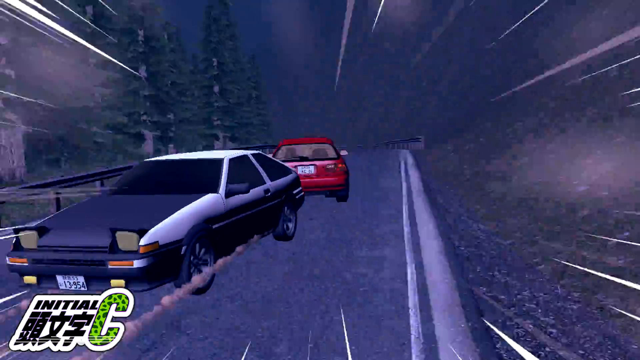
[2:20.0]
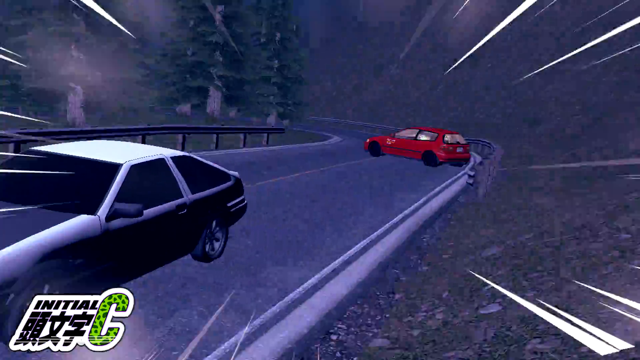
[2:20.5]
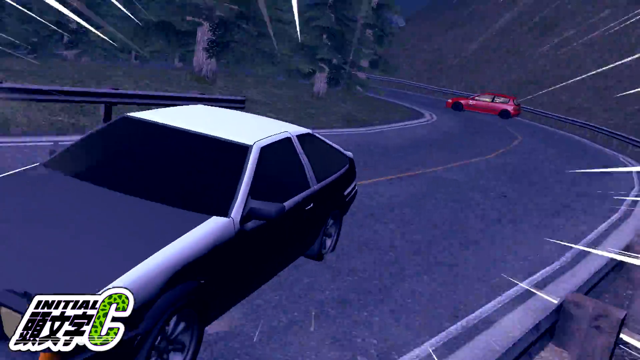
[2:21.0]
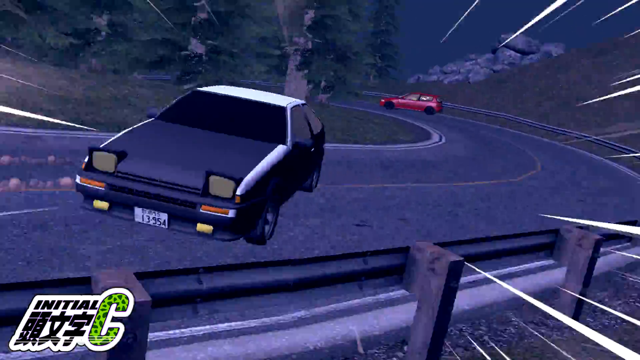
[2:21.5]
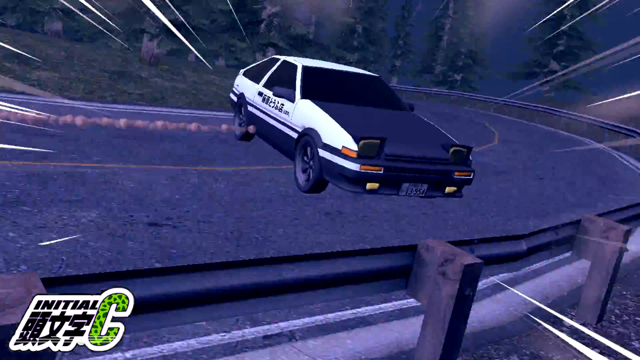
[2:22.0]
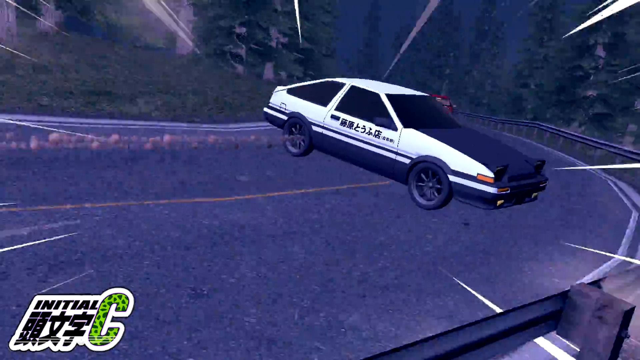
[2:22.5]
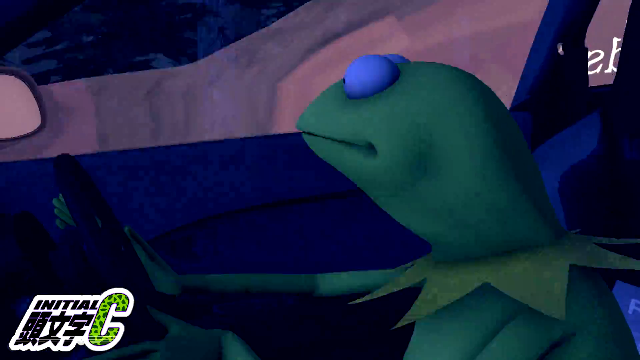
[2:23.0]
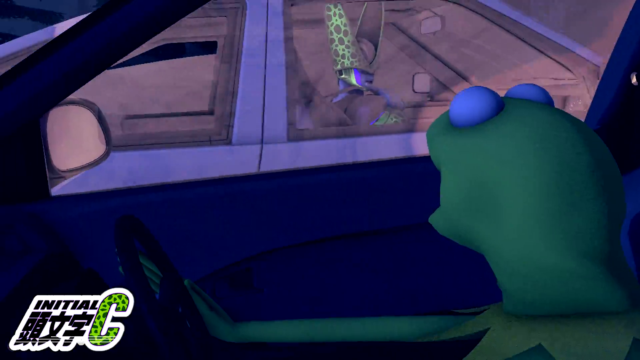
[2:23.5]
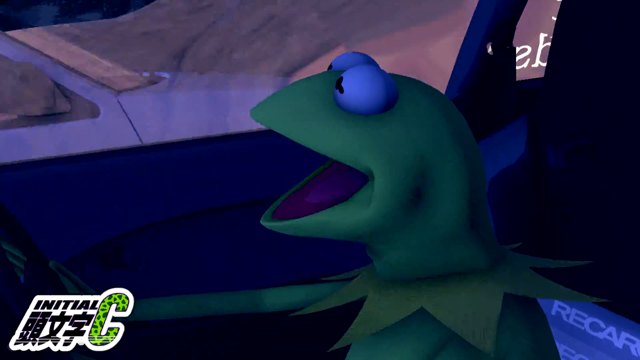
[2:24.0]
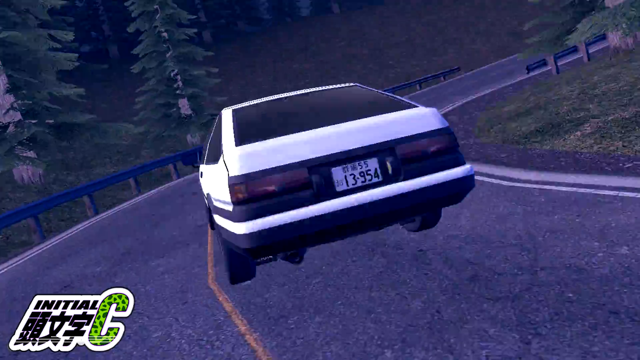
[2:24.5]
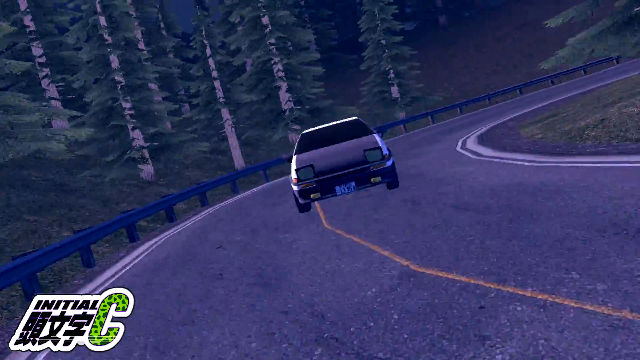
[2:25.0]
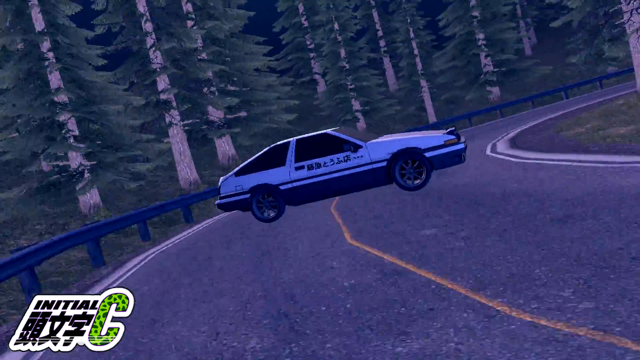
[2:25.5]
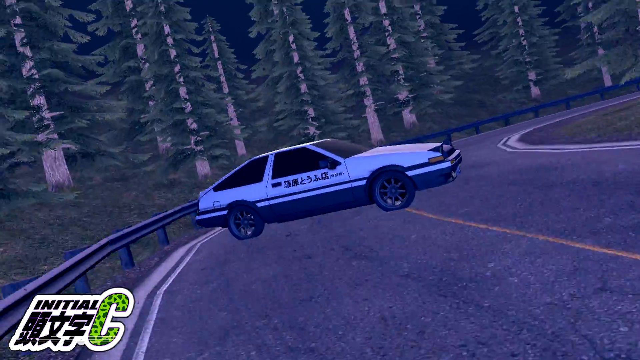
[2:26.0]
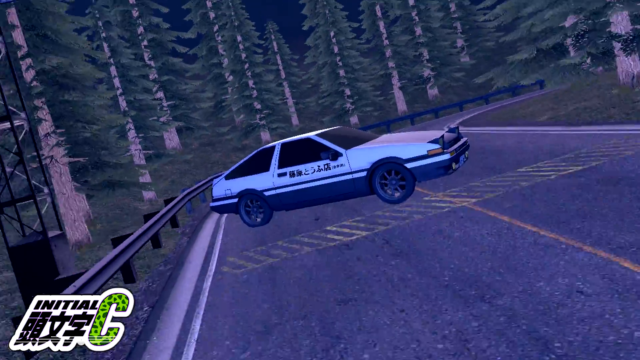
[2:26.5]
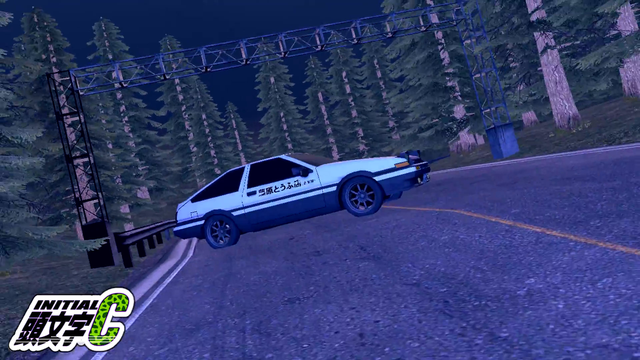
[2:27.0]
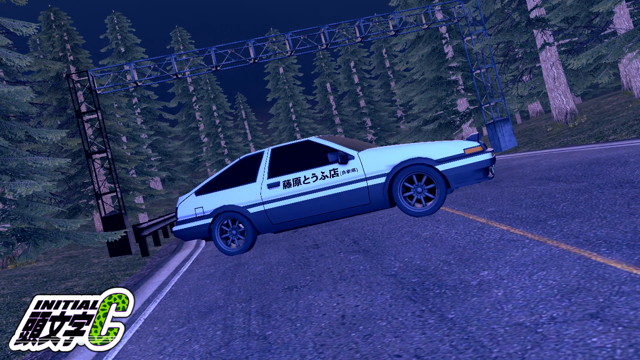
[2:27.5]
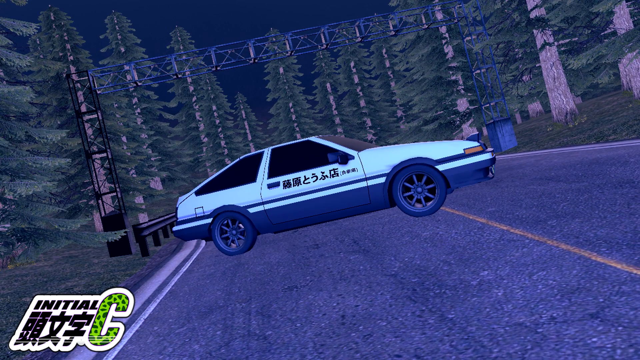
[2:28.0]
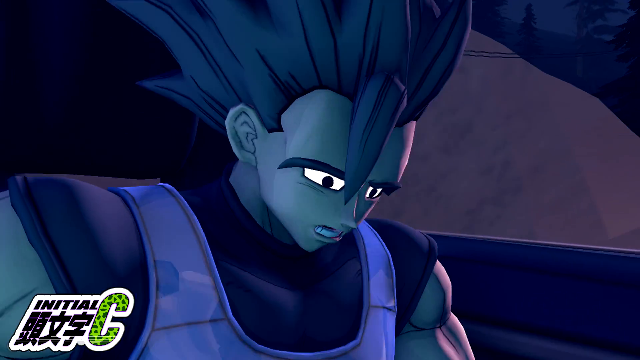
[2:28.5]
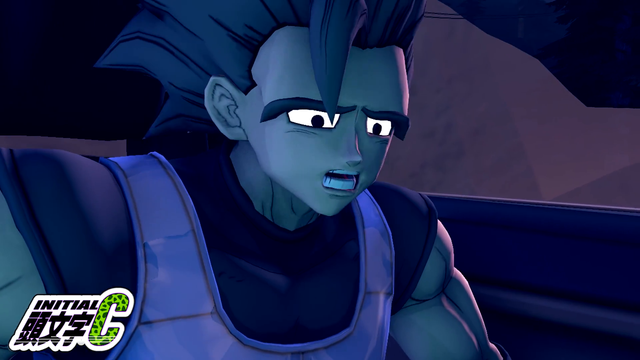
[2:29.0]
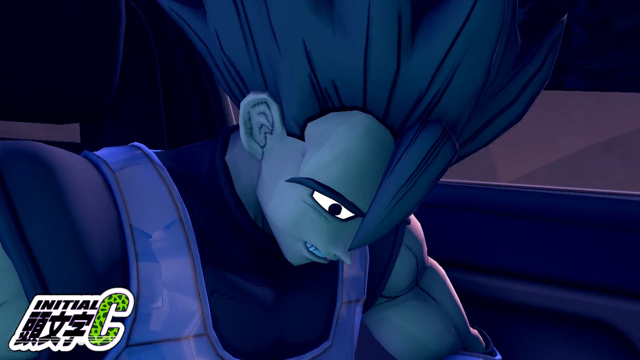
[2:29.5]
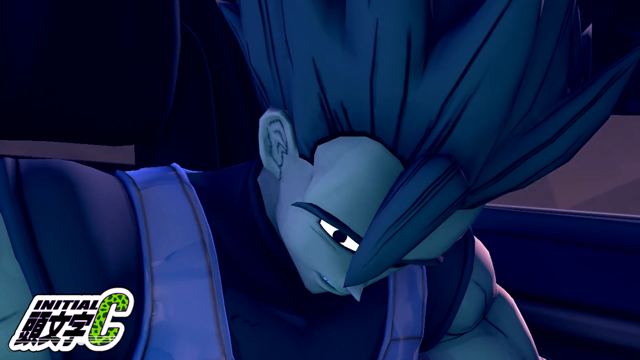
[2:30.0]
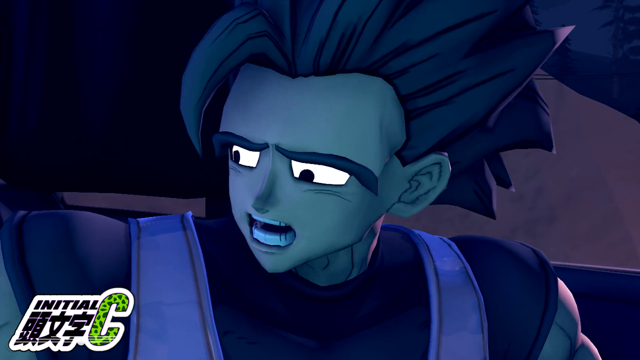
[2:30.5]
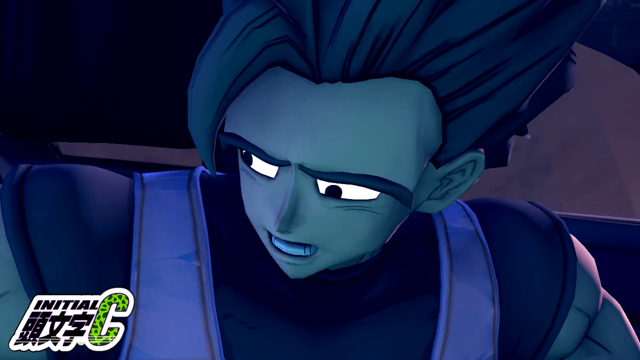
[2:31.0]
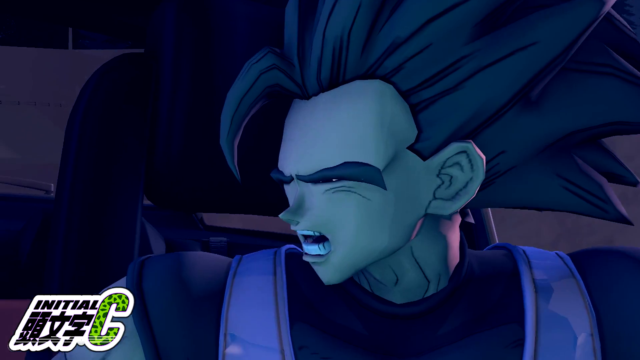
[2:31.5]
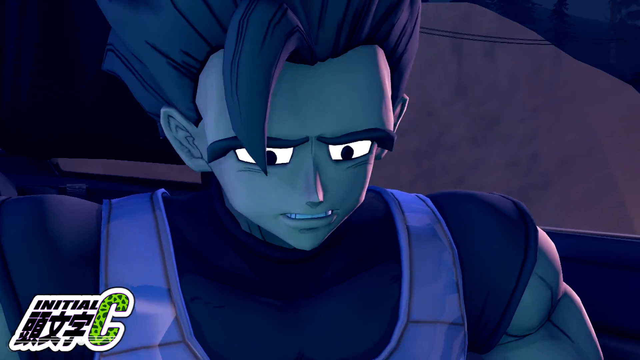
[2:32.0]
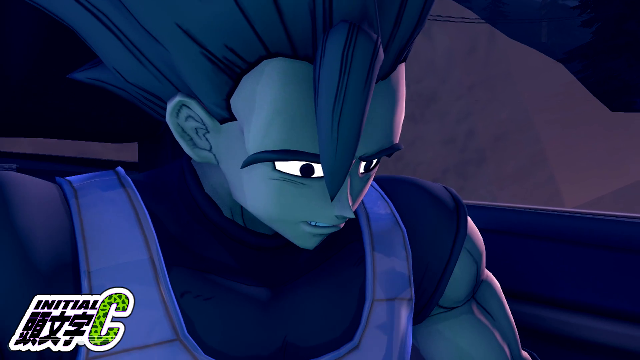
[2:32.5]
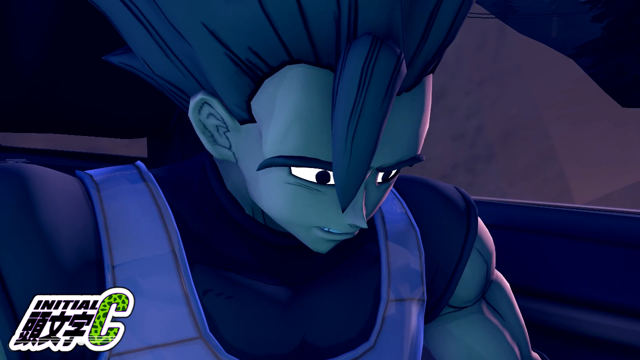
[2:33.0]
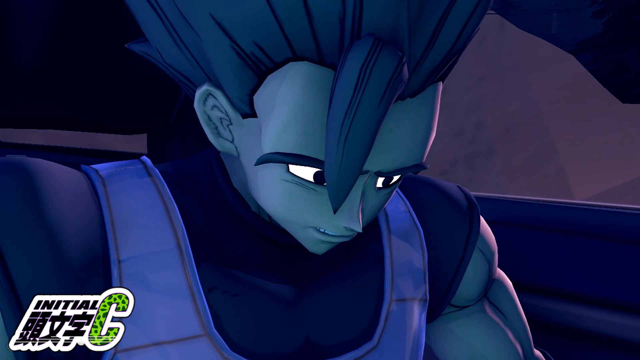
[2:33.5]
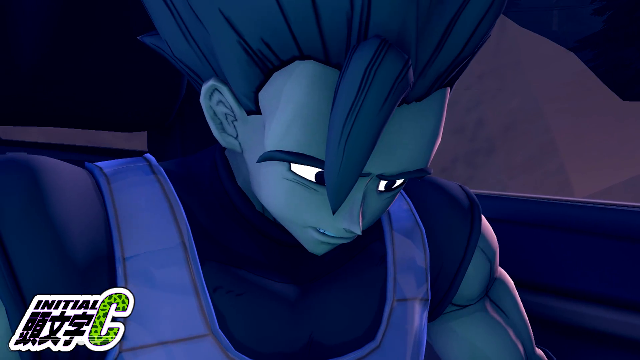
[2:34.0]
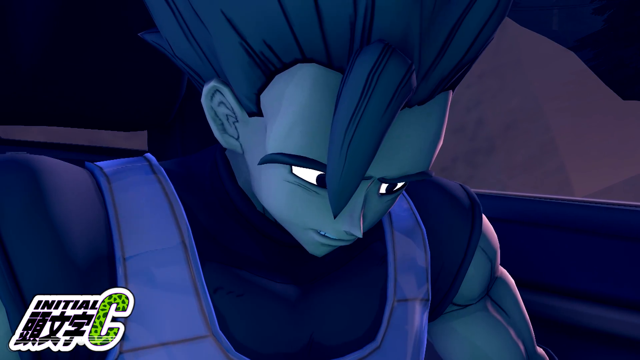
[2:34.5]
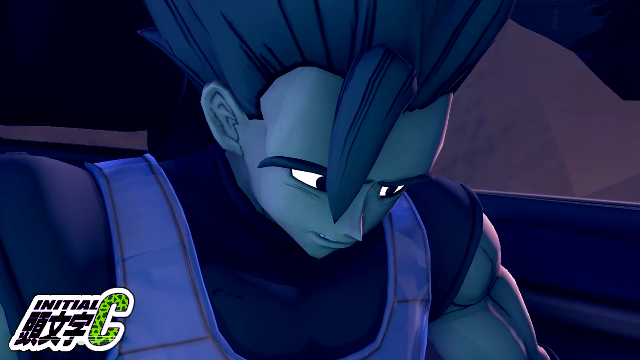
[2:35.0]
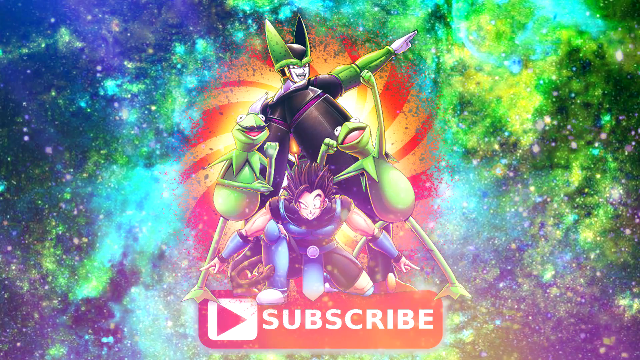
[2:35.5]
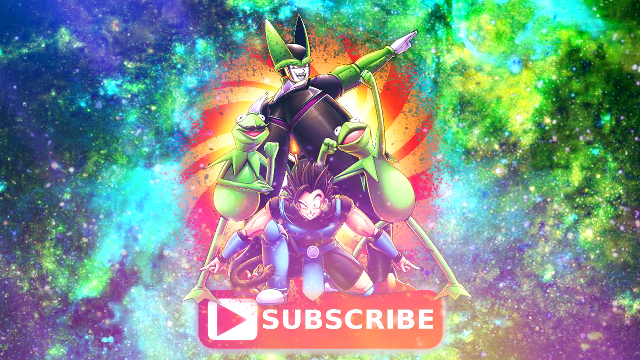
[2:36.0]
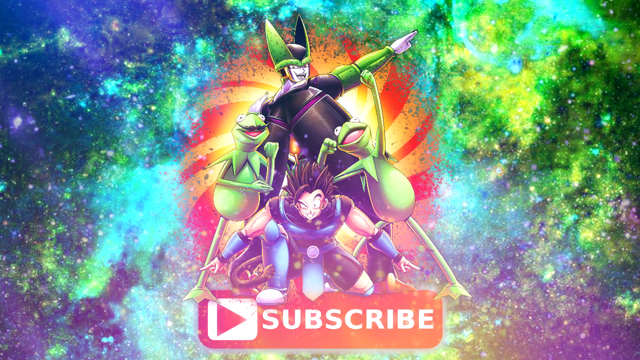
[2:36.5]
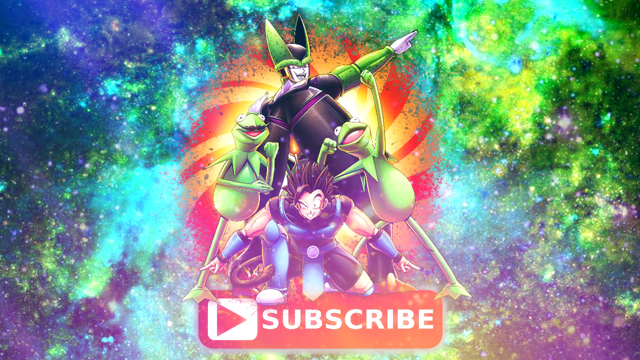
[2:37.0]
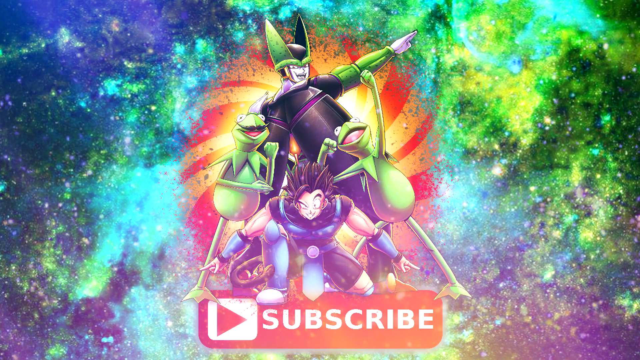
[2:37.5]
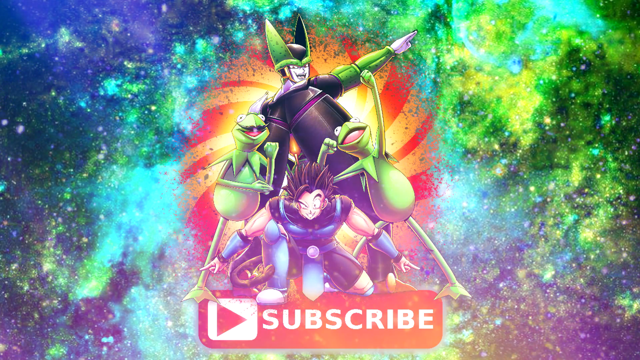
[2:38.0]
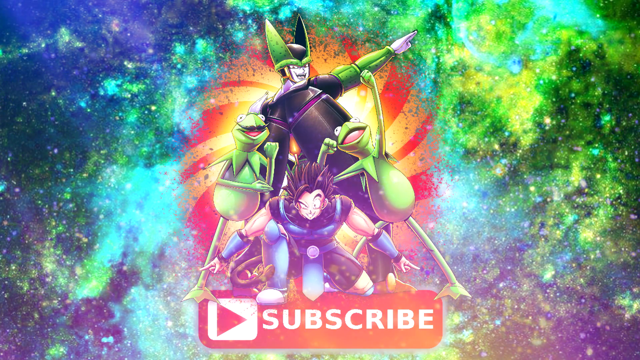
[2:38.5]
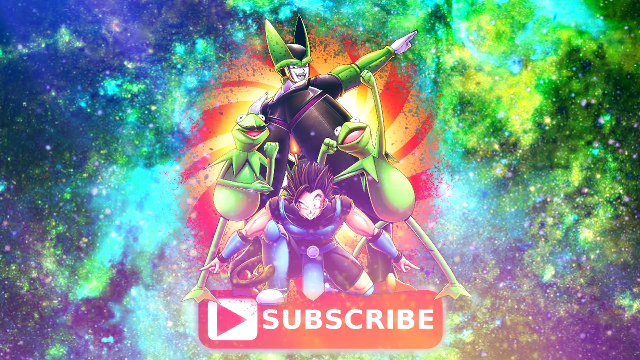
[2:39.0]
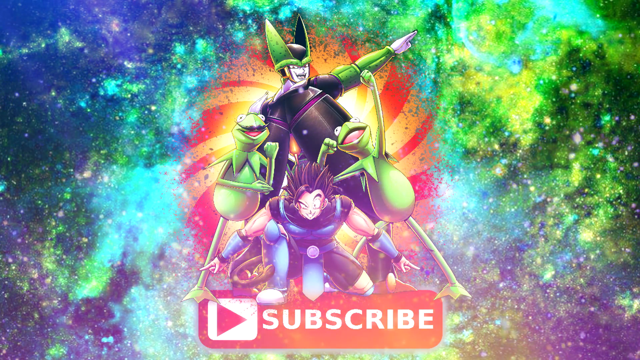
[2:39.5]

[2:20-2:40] The white car carrying the Dragon Ball characters spins out wildly. The Goku character is apparently cussing and looks very anxious, though he survives. Kermit the Frog in the red car apparently has won the race, and the Goku or Vegeta character looks angry. Toward the end, the word "subscribe" appears with Dragon Ball characters in the background of the picture: two Kermit the Frogs, what looks like Goku, and a character possibly named Cell.